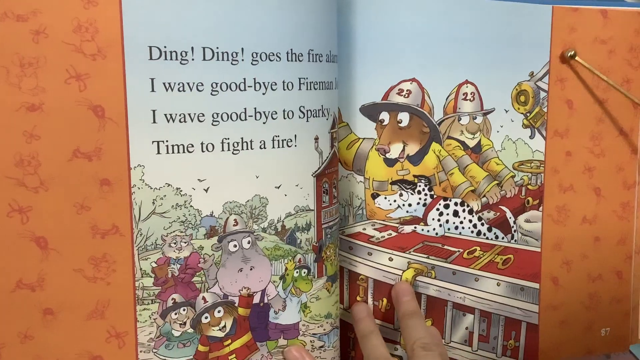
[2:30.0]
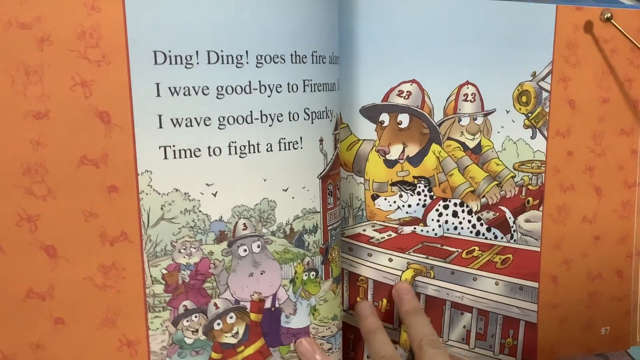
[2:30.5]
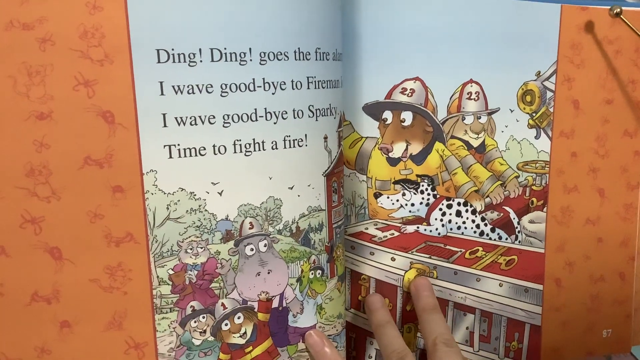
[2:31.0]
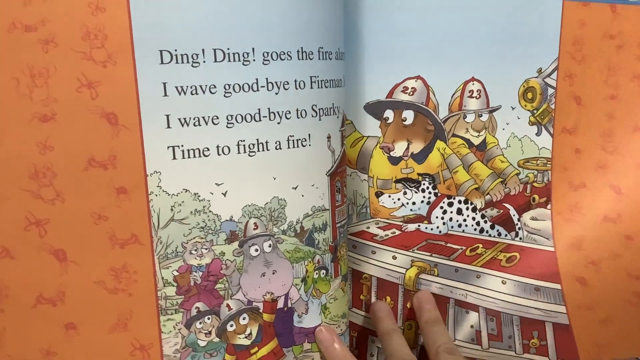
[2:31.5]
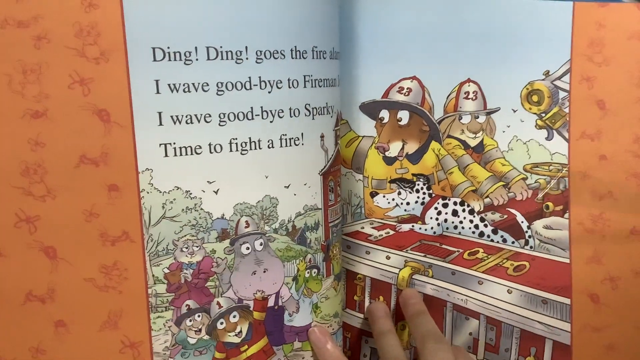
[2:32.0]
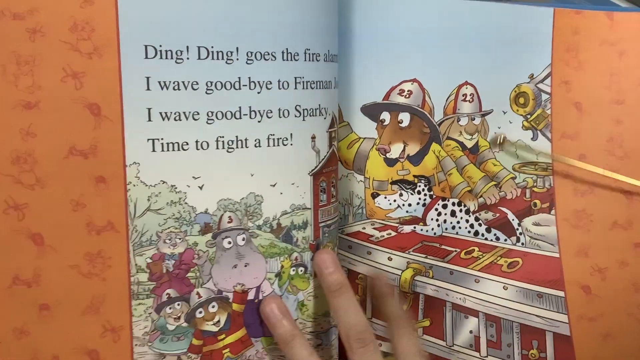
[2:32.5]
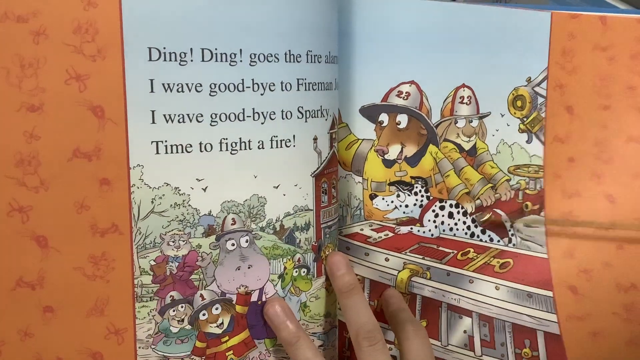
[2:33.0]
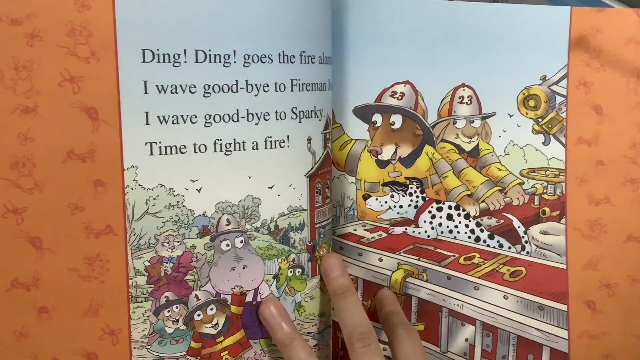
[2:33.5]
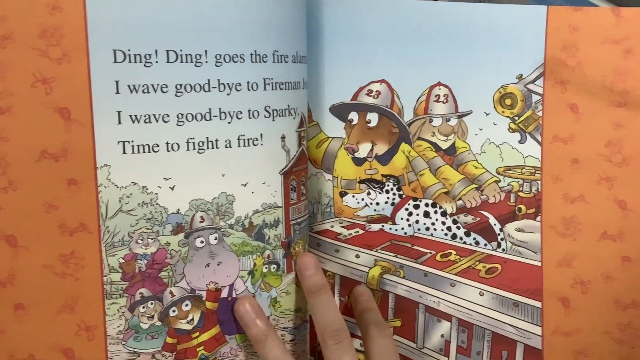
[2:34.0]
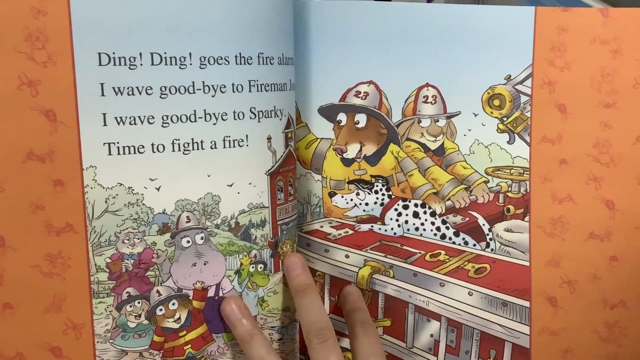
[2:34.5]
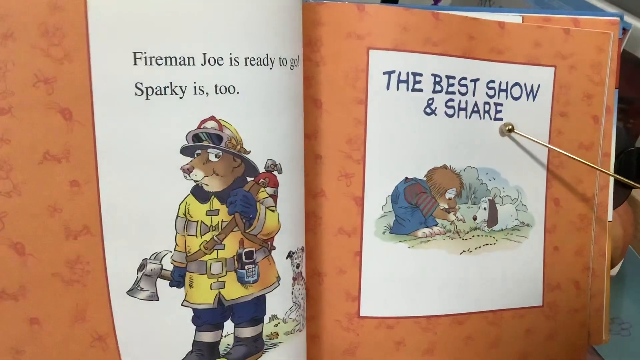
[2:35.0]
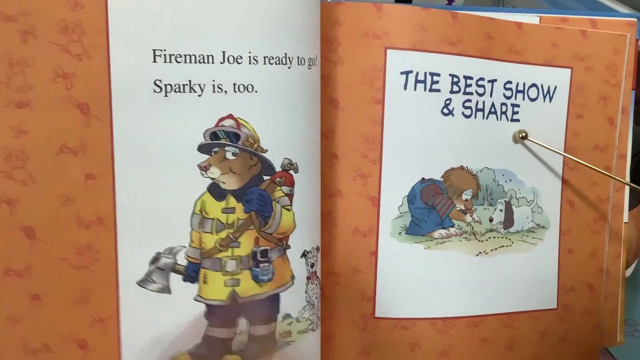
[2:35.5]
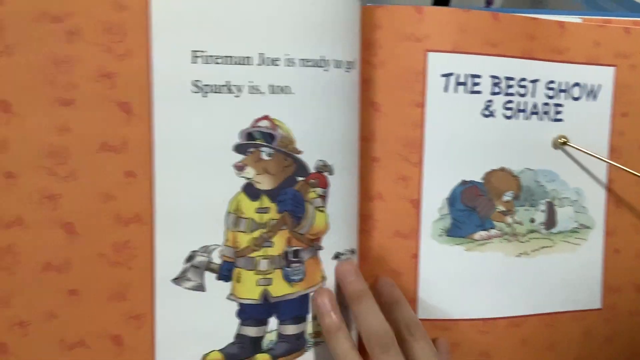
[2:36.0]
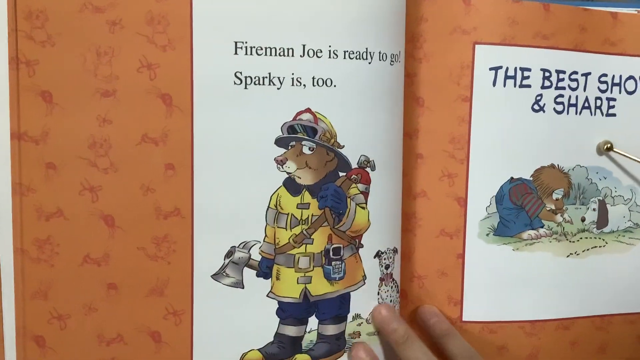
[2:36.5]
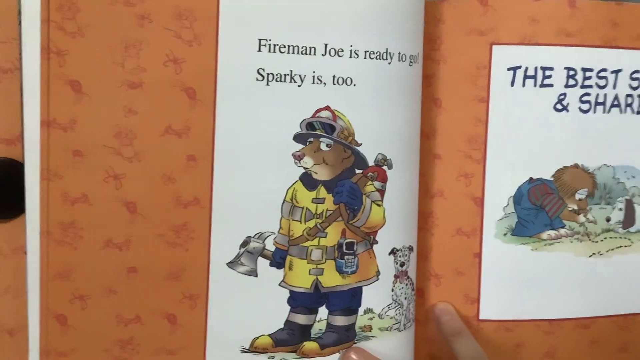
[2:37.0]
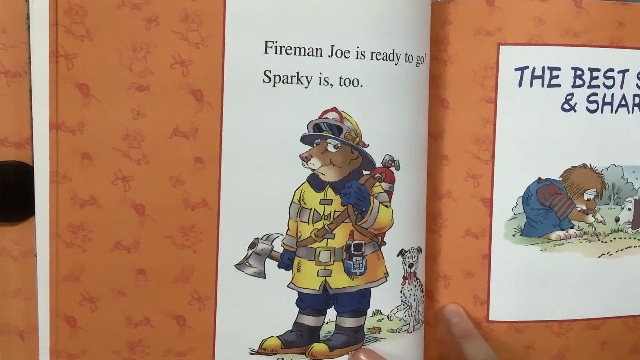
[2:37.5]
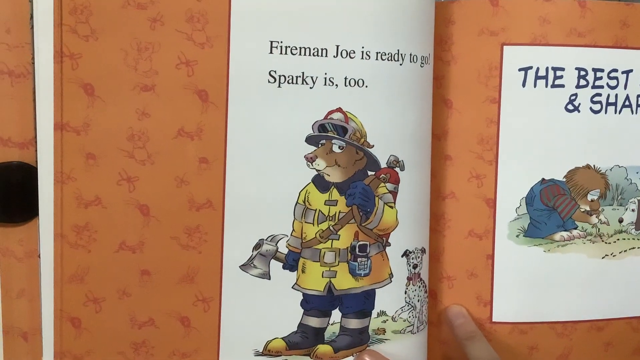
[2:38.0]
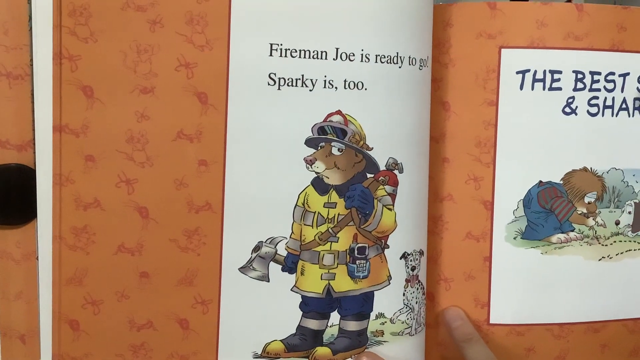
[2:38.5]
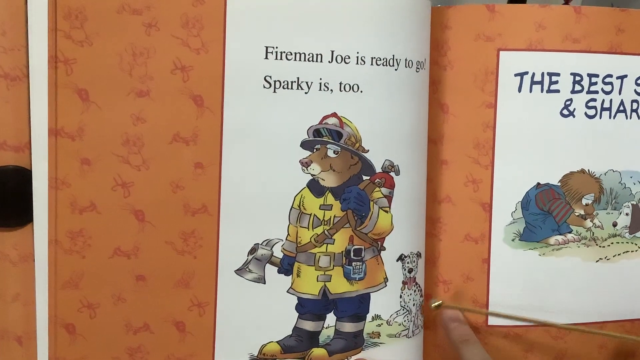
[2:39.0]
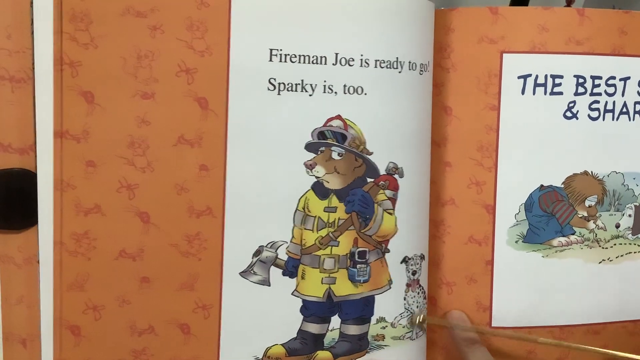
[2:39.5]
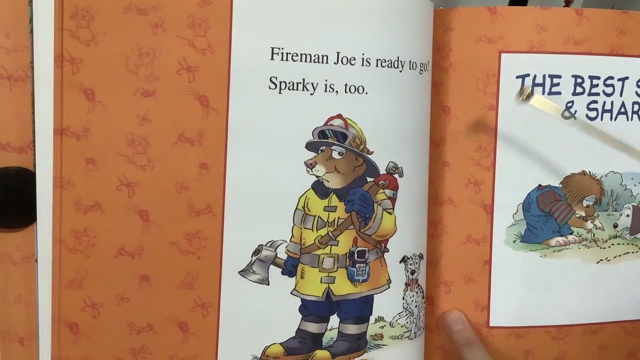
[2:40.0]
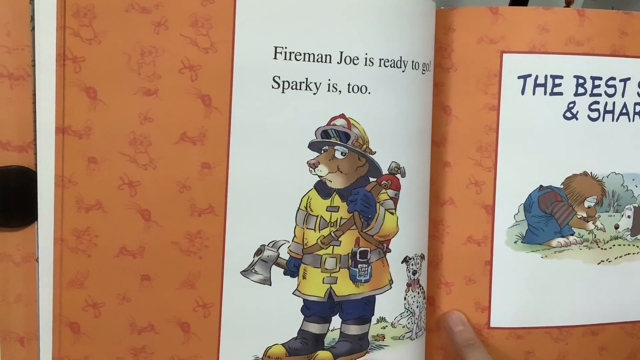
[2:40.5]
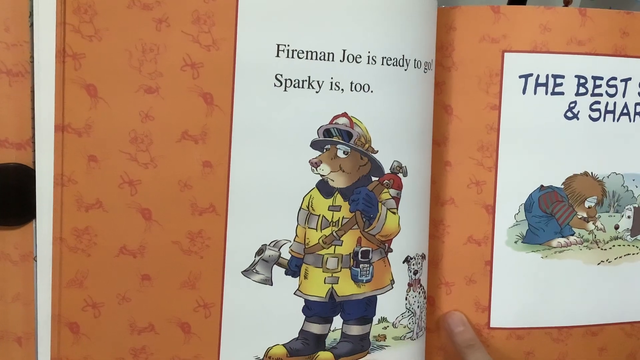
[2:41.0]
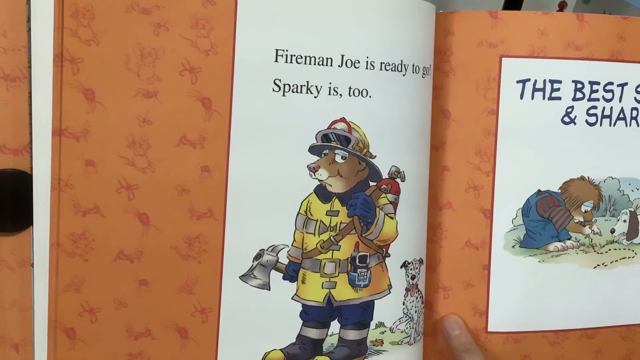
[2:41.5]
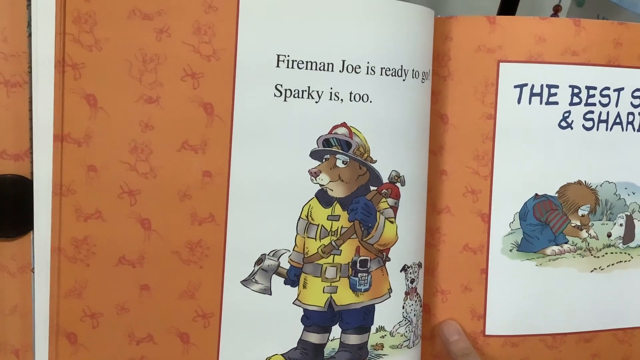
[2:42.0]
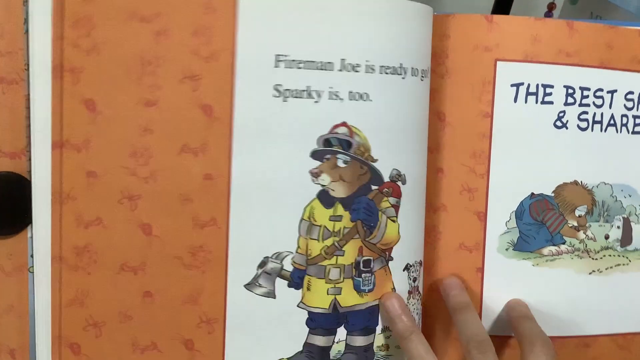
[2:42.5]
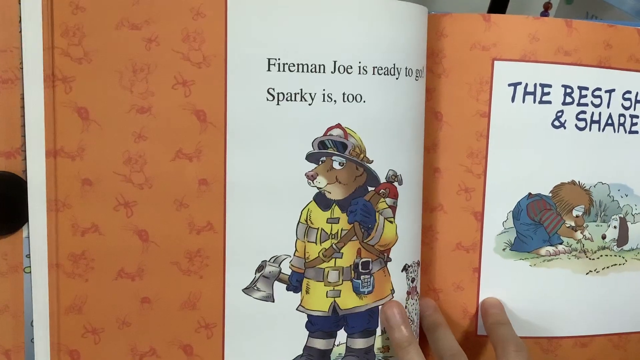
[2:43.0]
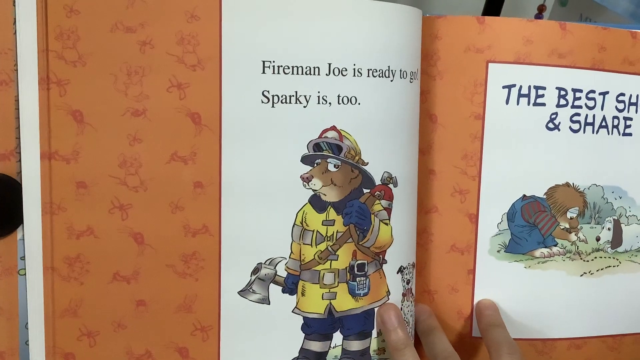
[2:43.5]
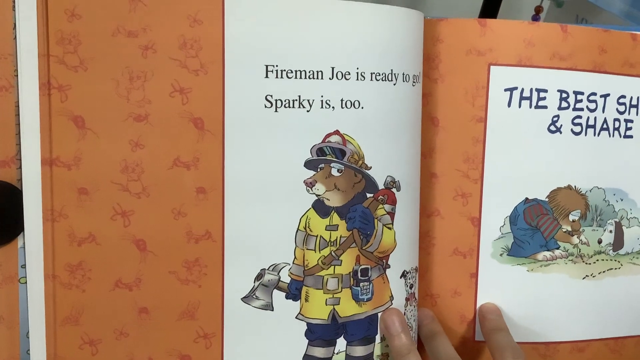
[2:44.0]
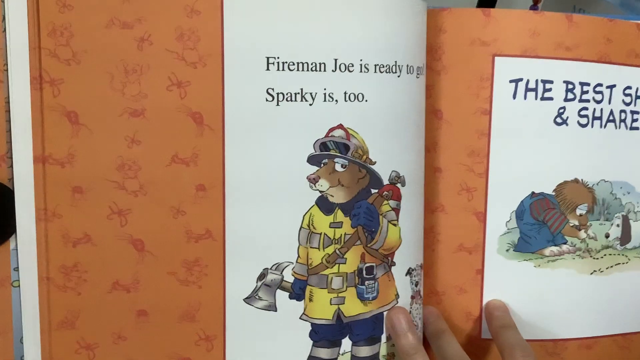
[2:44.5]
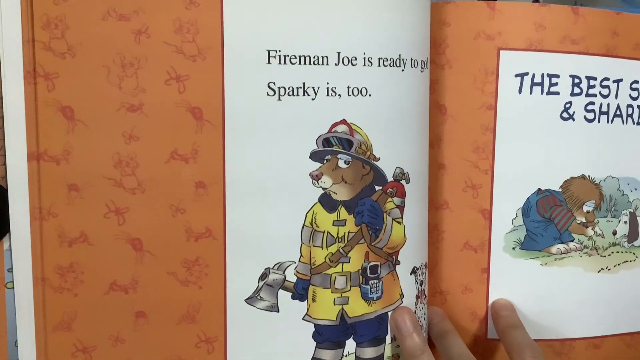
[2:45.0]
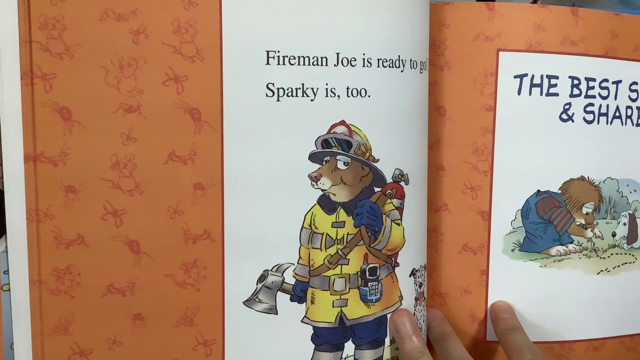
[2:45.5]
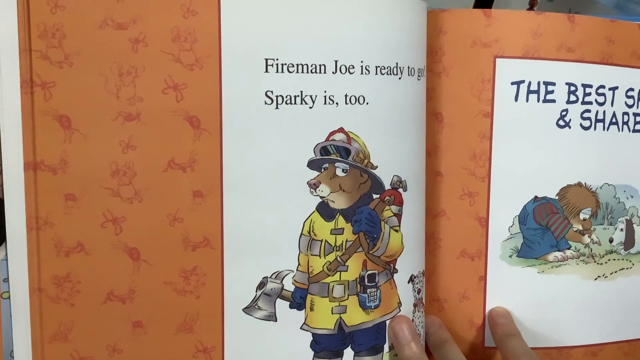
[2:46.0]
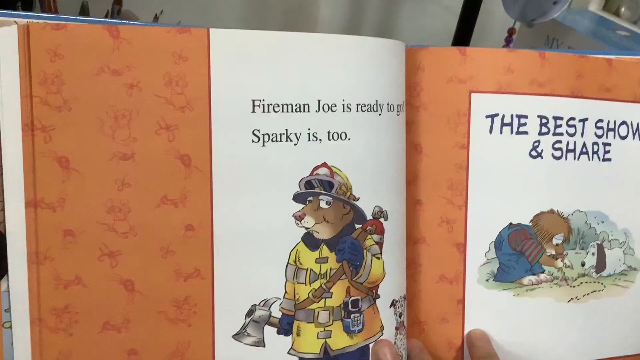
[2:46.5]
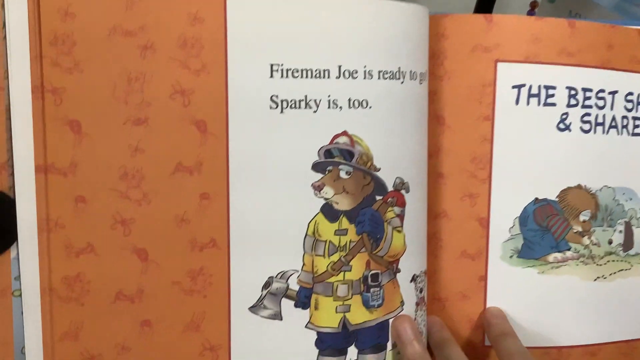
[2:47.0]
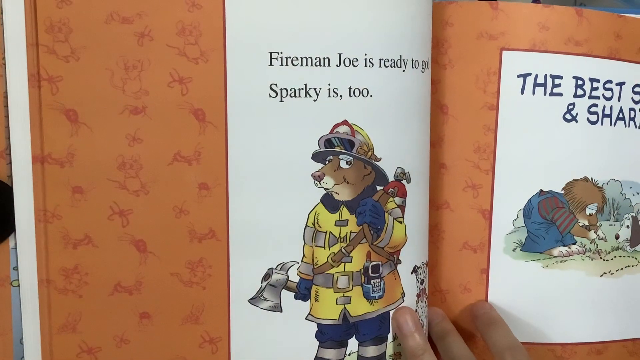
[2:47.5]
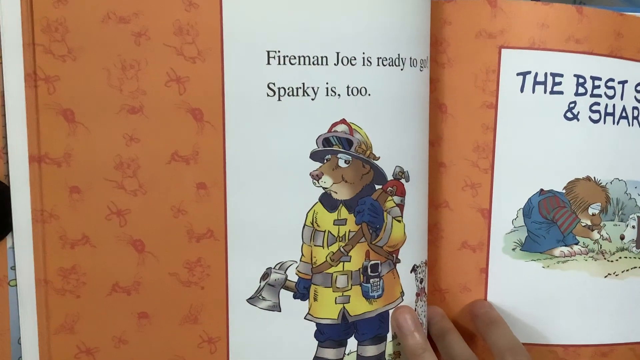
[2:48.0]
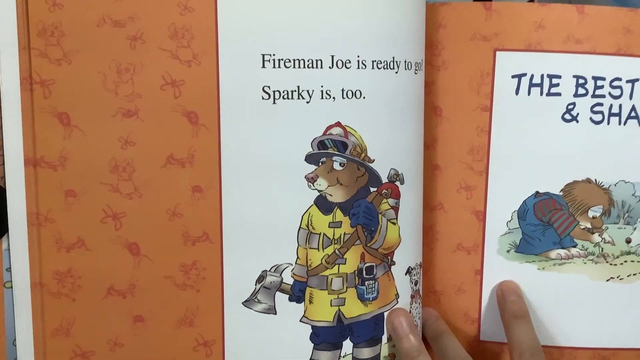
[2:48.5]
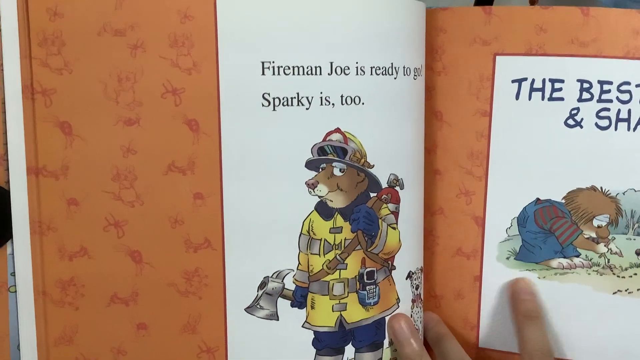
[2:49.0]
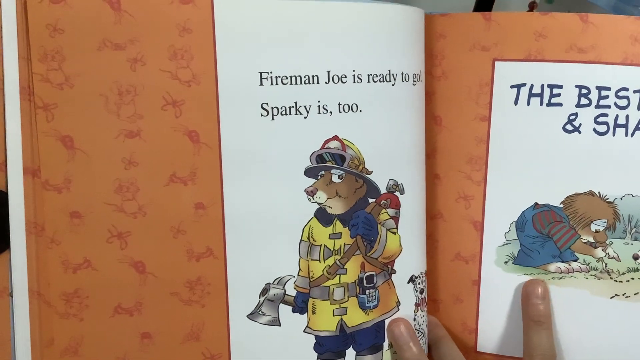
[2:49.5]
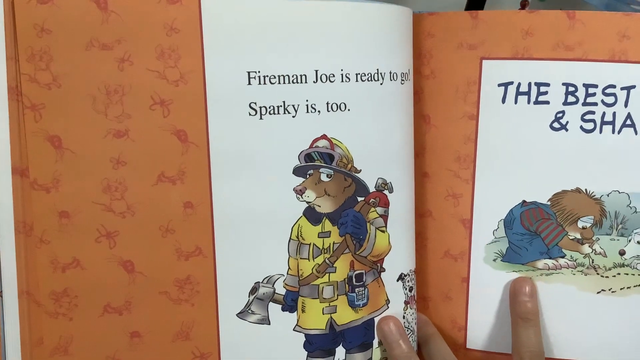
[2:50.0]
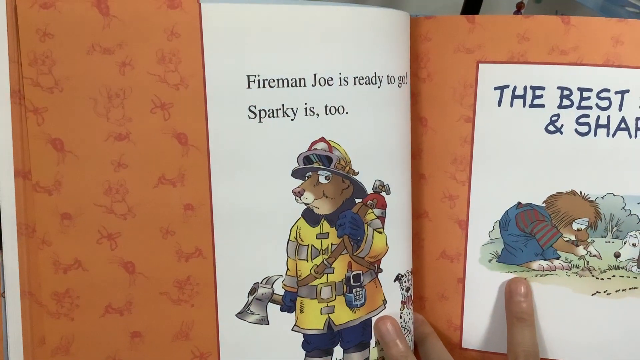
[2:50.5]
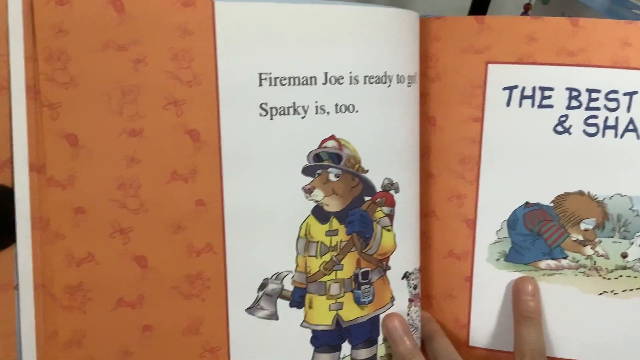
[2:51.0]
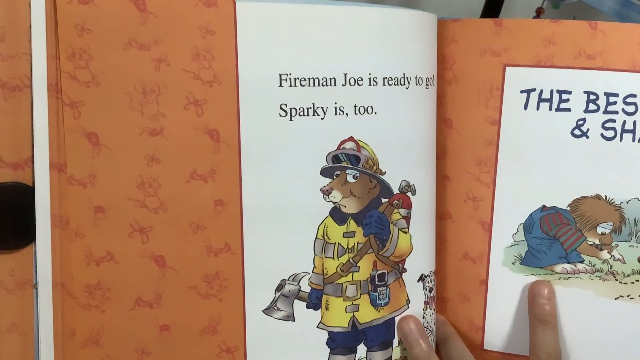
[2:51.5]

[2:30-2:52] The last page shows the fireman bear, Fireman Joe, with a hatchet, his yellow fireman outfit, his helmet and blue gloves, with his Dalmatian dog behind him. He is all alone with only the Dalmatian. The text on the screen says, "Fireman Joe is ready to go, Sparky is too." This page is white and does not show where it is set. The page to the left shows the dog child with the Dalmatian dog on a green field with green trees in the background. He wears blue dungarees with a stripy red and green t-shirt. He and the dog look sad. The text on this page is hard to see; only "the best sh" and "share" can be made out. The background is white with the field showing, and there are birds in the sky. The dog is white with black ears. It seems to be showing the end of the story.